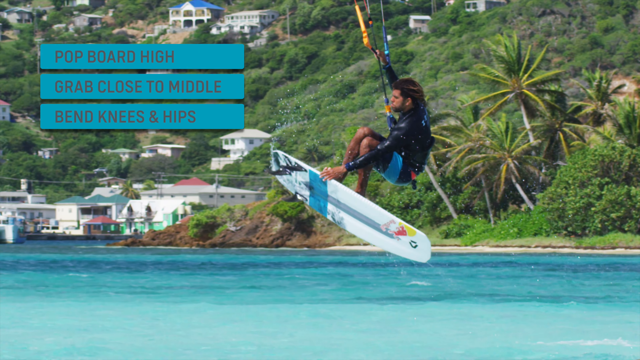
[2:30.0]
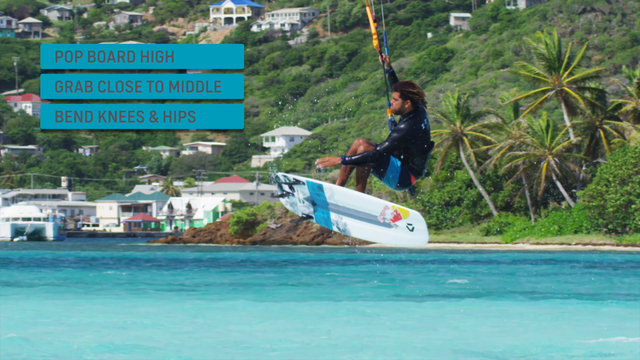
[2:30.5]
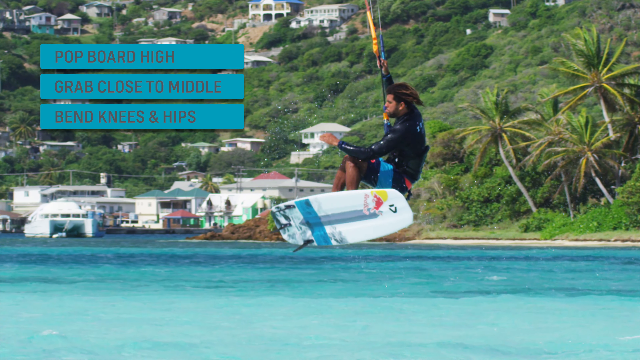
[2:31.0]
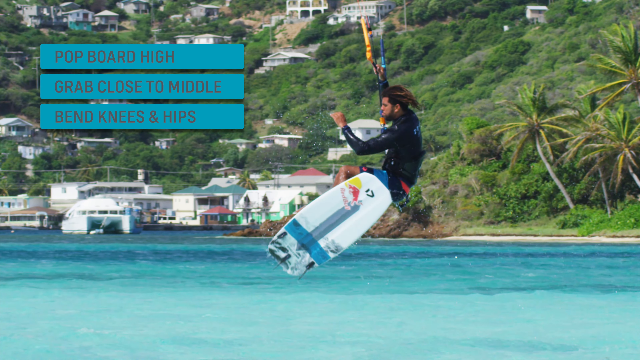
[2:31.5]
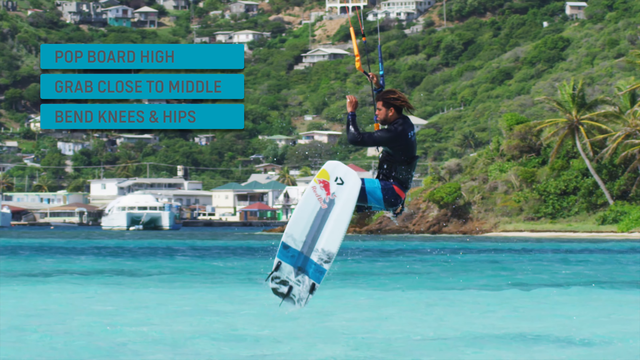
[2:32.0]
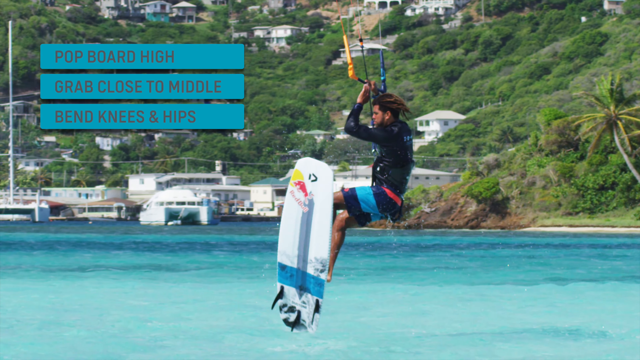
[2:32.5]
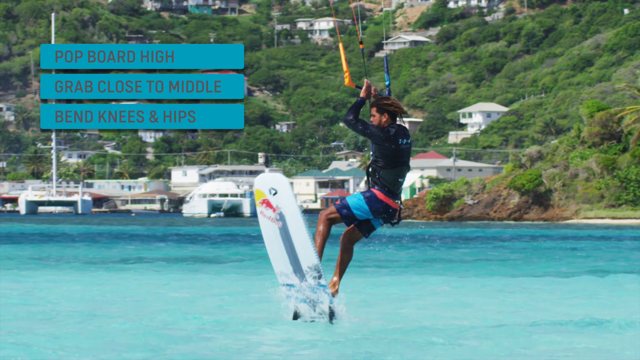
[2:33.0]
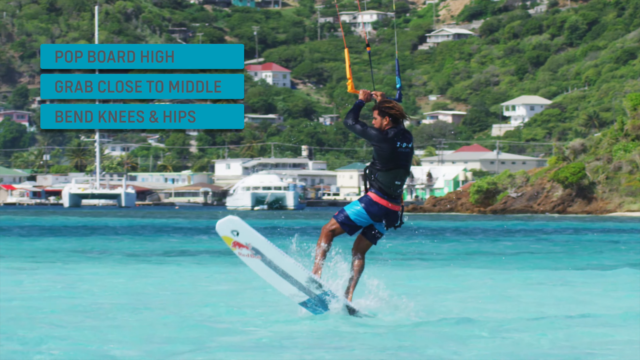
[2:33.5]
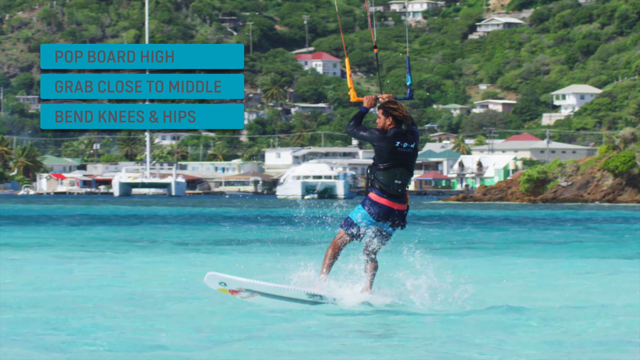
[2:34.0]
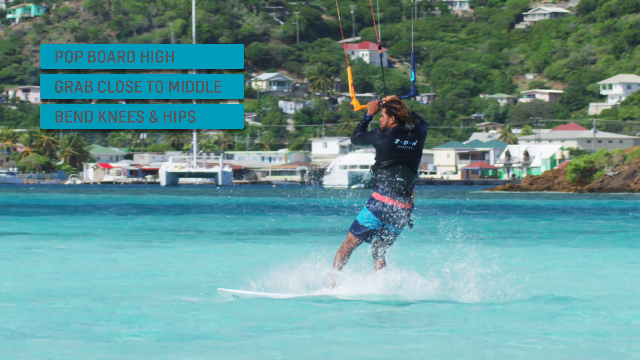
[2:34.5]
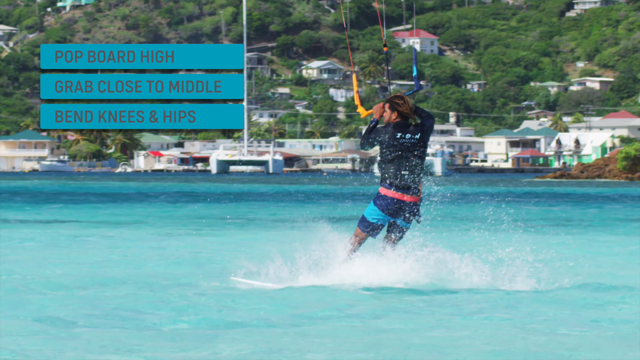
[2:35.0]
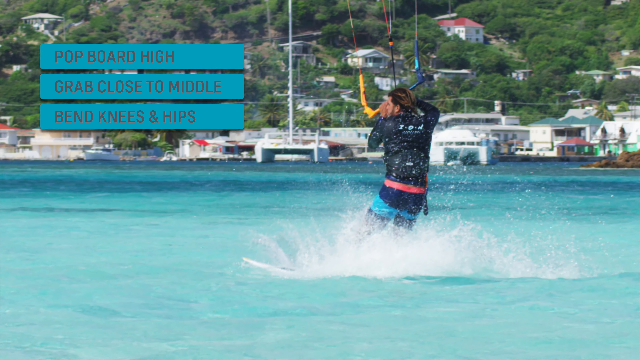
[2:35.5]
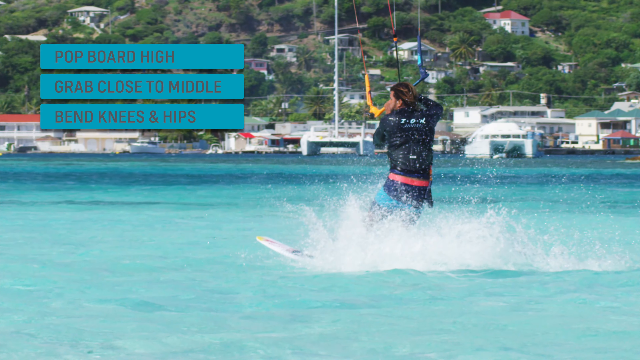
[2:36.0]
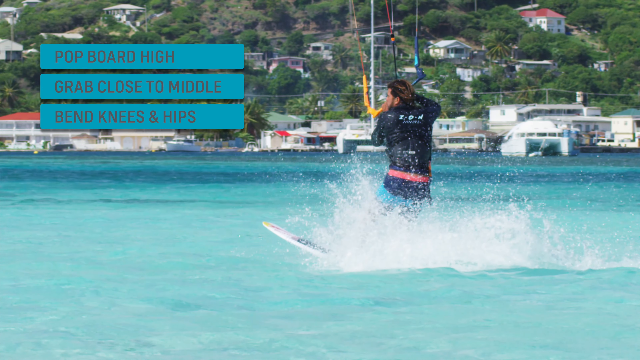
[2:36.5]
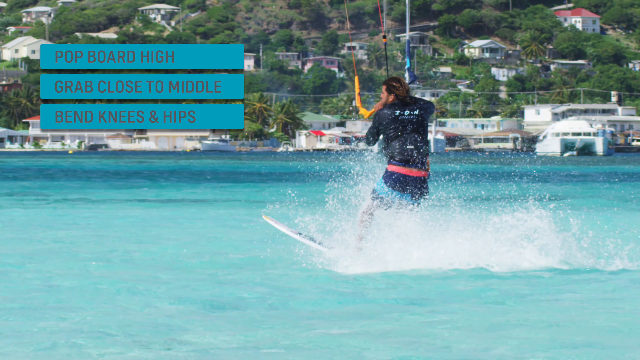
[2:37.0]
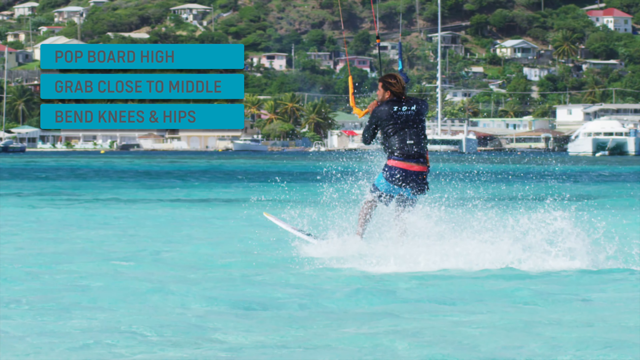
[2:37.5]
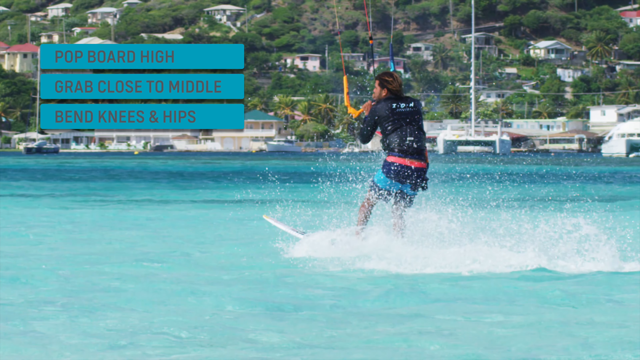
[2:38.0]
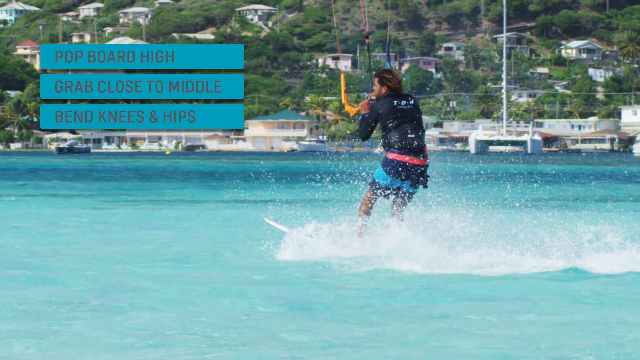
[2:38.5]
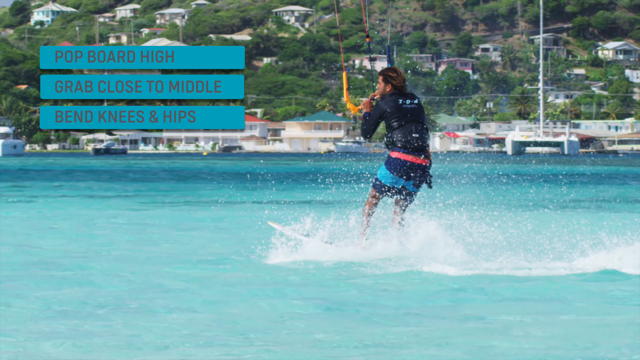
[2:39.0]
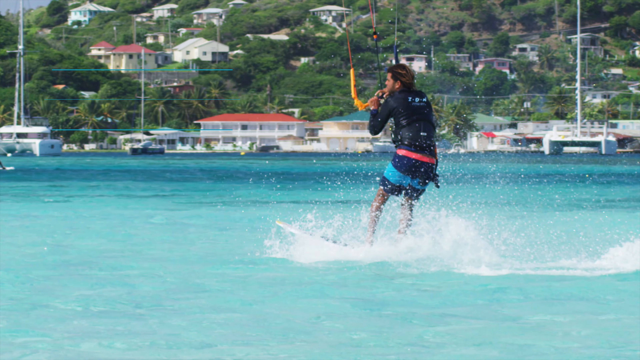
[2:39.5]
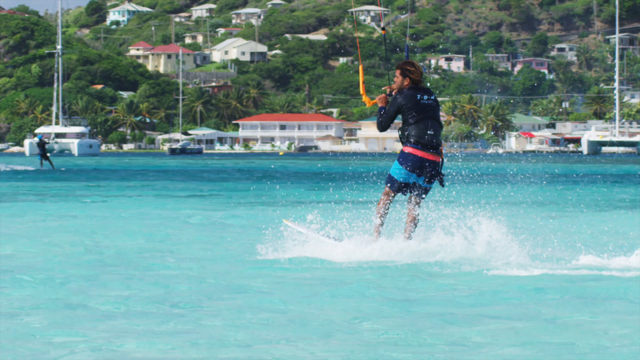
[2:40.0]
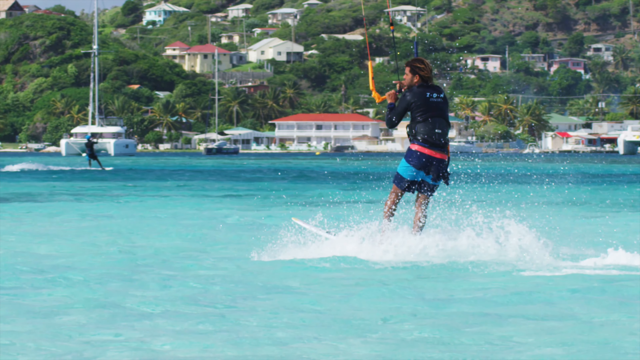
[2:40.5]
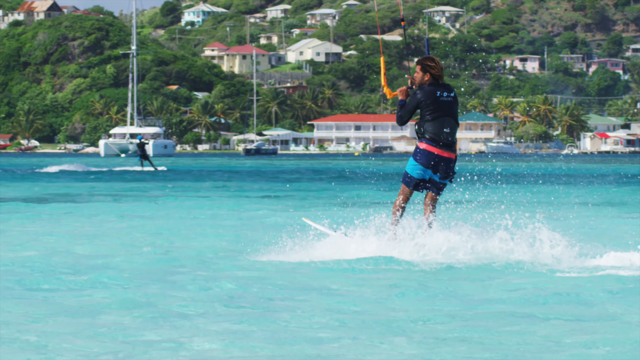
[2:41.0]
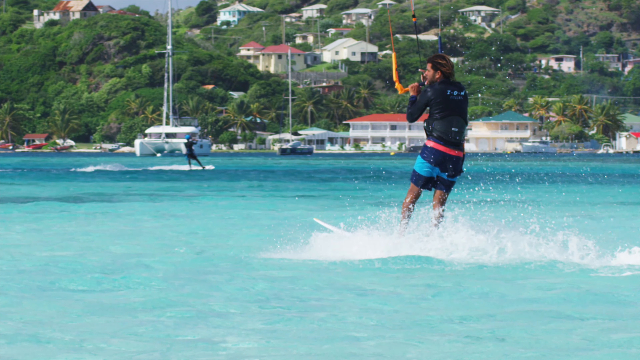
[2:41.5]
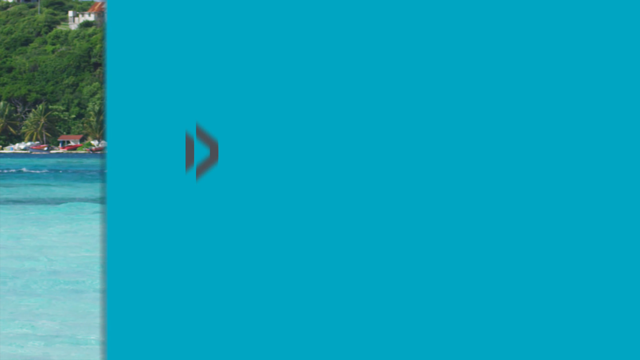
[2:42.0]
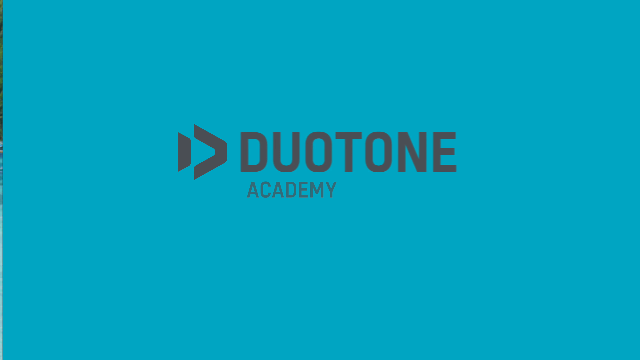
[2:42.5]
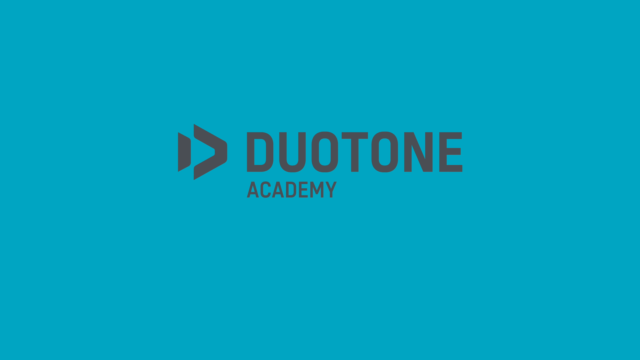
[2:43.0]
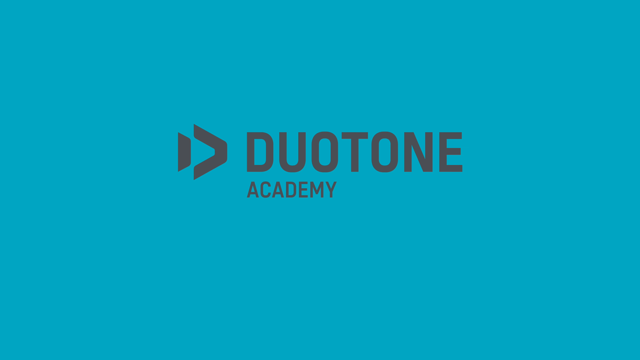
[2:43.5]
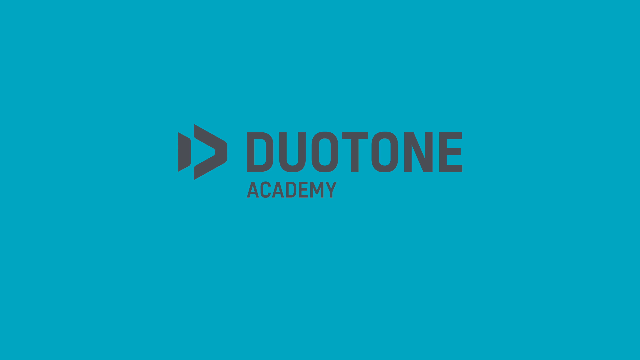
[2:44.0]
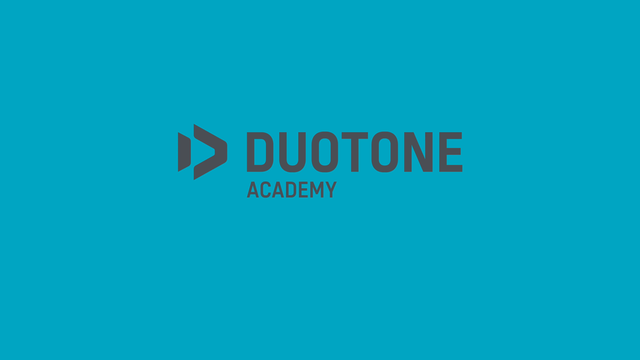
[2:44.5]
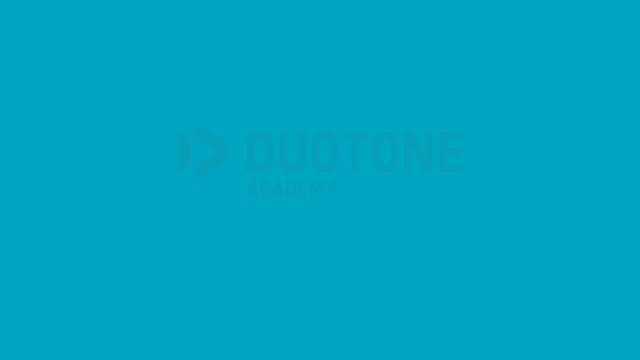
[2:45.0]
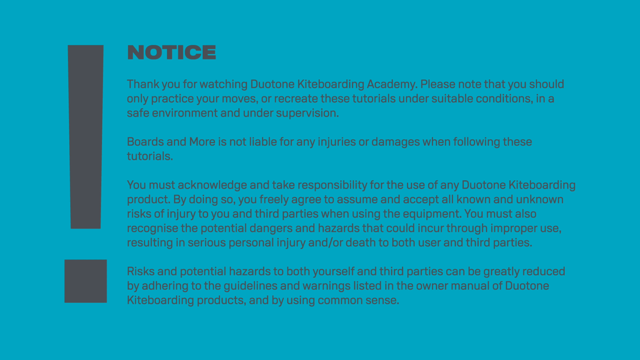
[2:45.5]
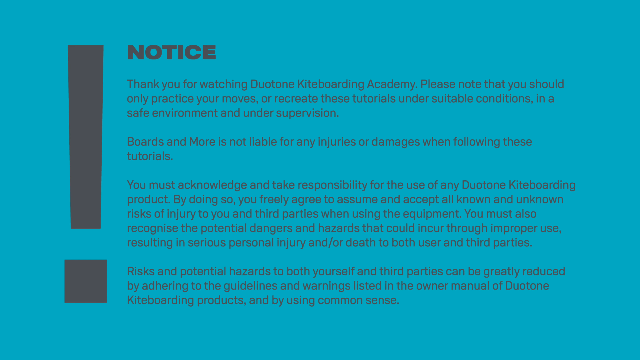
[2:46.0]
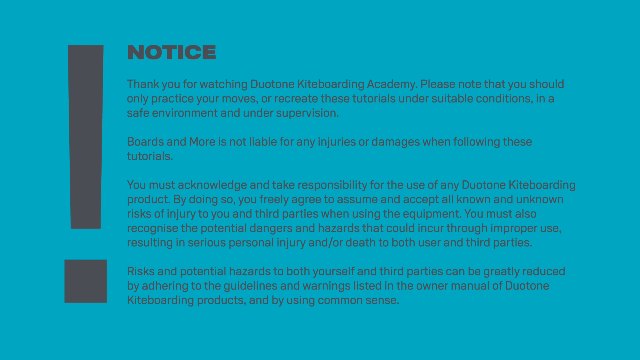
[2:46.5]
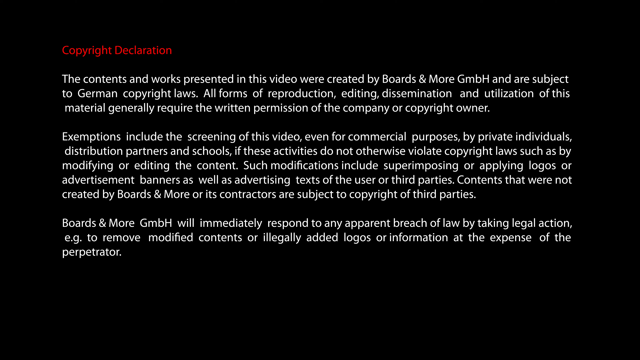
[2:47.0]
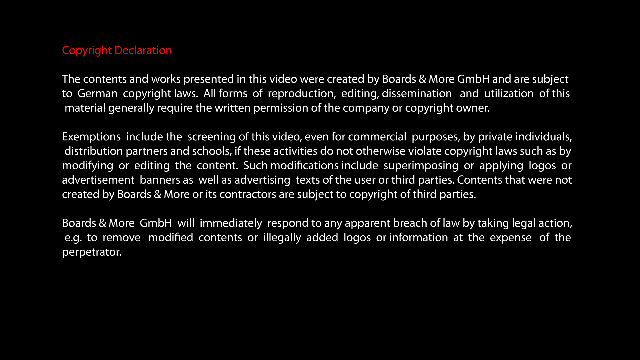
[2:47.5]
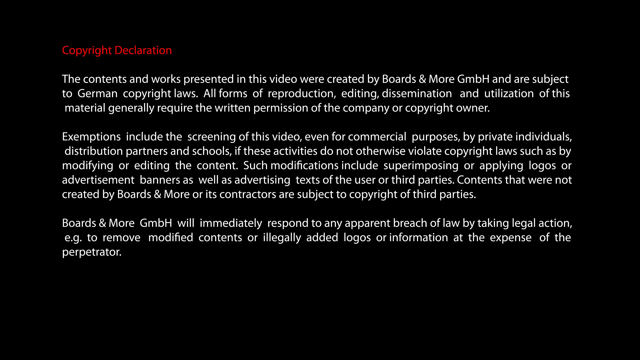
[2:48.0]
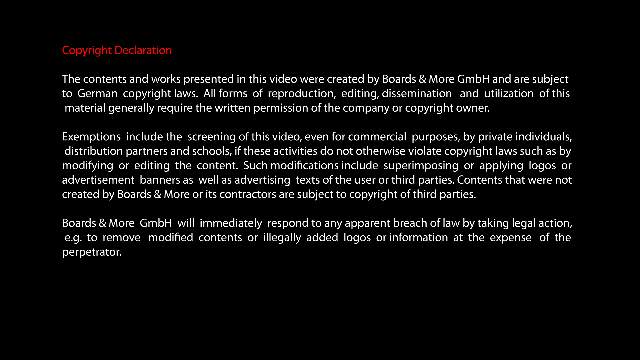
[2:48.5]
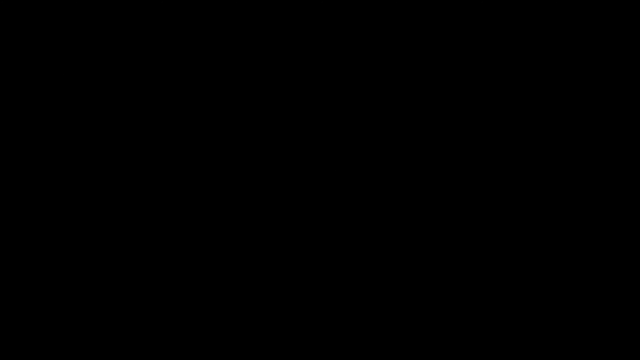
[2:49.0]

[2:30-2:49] The man holds the bottom of the board as it turns and lands in the water. He then puts both feet on the board and holds the bar, which is yellow, with both hands. Water splashes up. The water is bluish-green, the sky is clear blue with white puffy clouds, and mountains are in the background. The words on the screen then disappear and the whole screen changes to an advertisement screen with a bluish-green background. The word "duotone" is written in a larger black block font, and below it, in smaller block print, is the word "academy." To the left of "duotone" is a symbol that looks kind of like a sideways V with a smaller line above the opening of the V. The video stays frozen on this screen for several seconds as it ends.